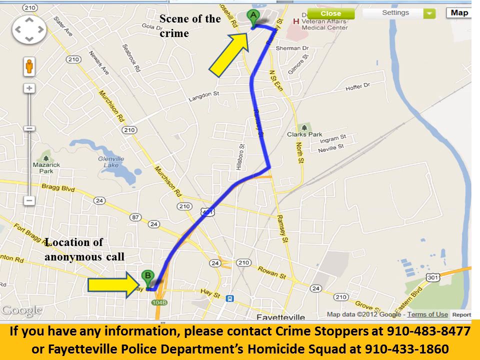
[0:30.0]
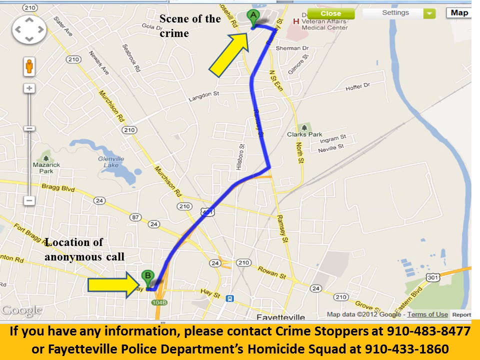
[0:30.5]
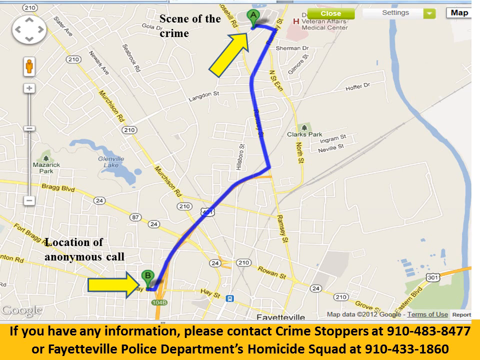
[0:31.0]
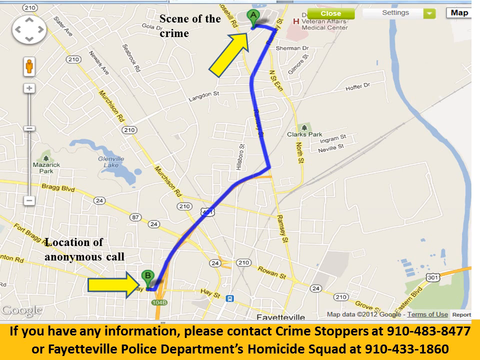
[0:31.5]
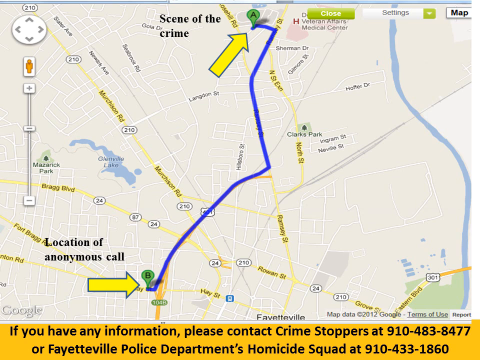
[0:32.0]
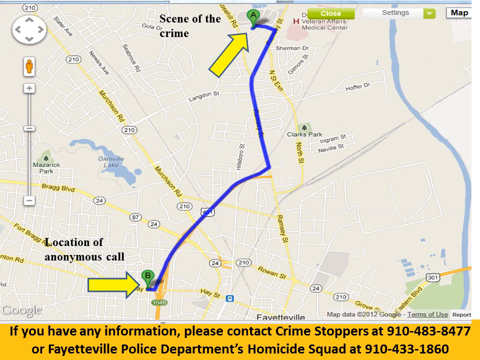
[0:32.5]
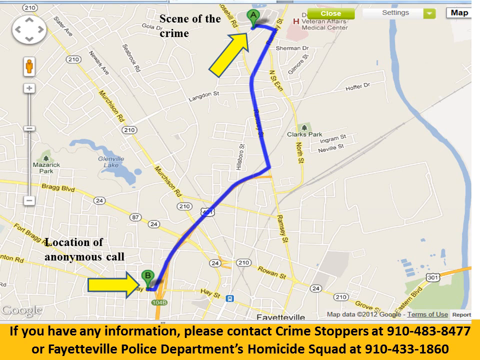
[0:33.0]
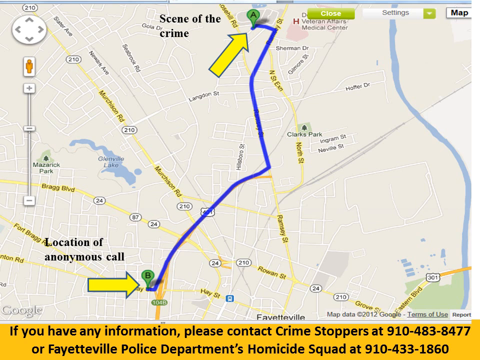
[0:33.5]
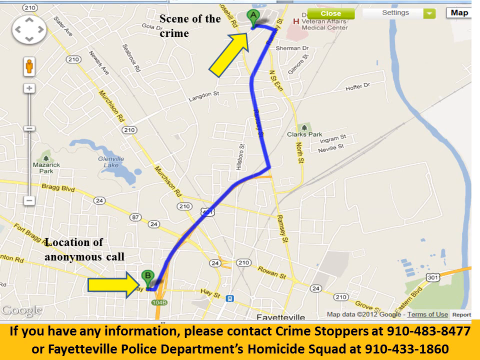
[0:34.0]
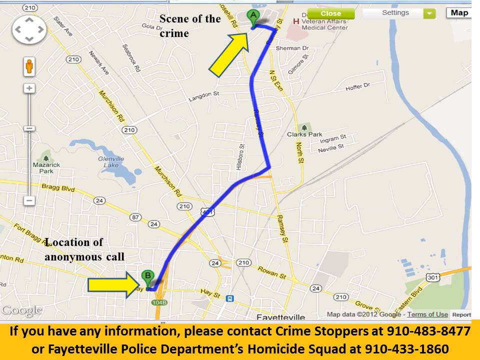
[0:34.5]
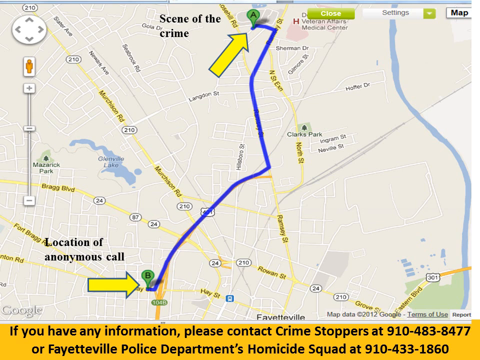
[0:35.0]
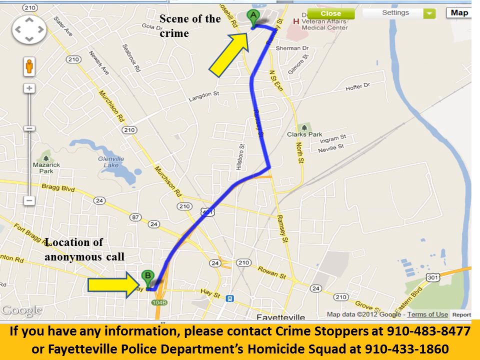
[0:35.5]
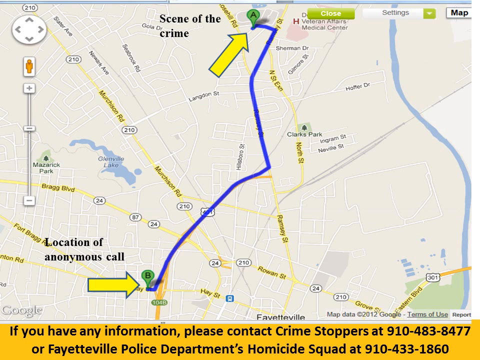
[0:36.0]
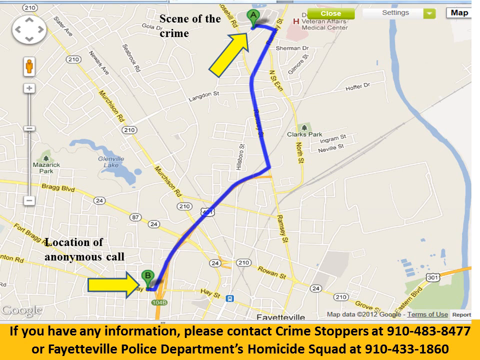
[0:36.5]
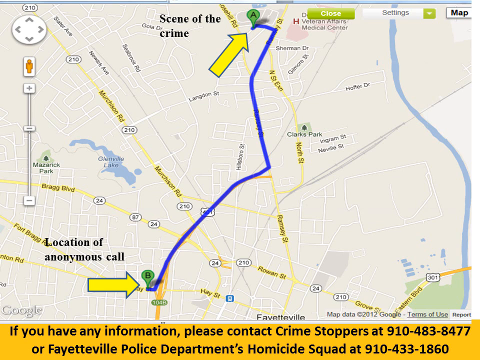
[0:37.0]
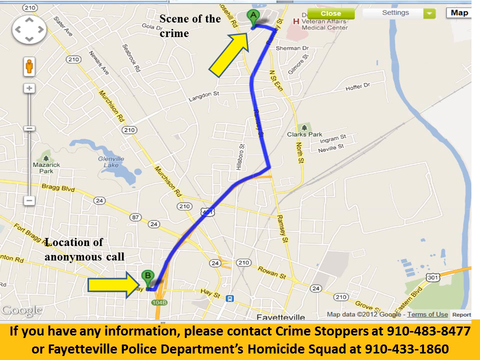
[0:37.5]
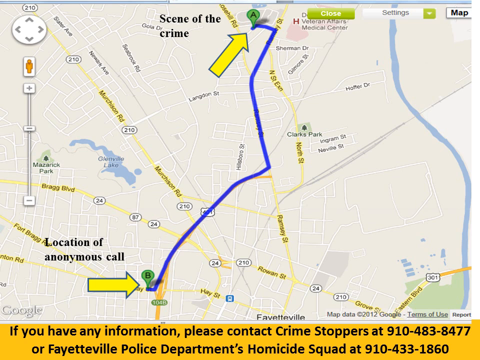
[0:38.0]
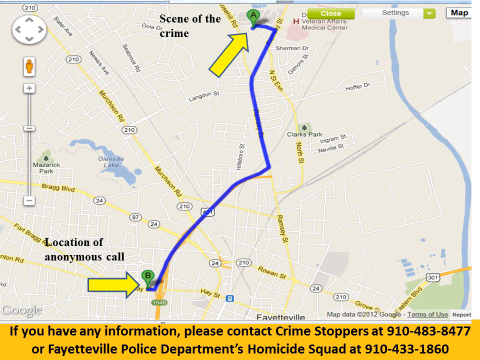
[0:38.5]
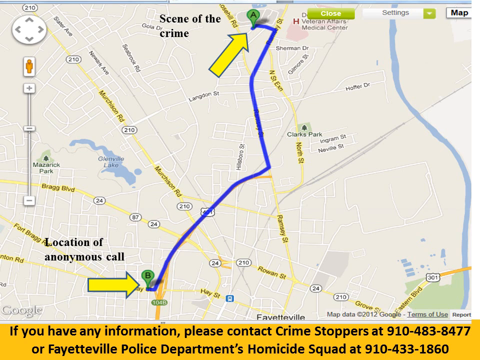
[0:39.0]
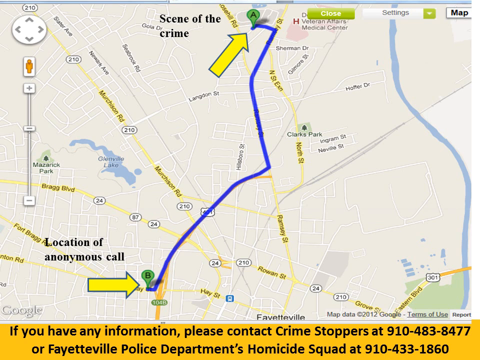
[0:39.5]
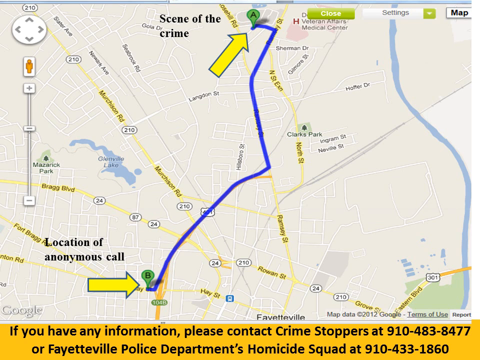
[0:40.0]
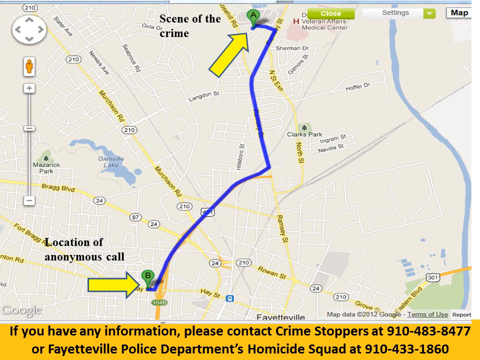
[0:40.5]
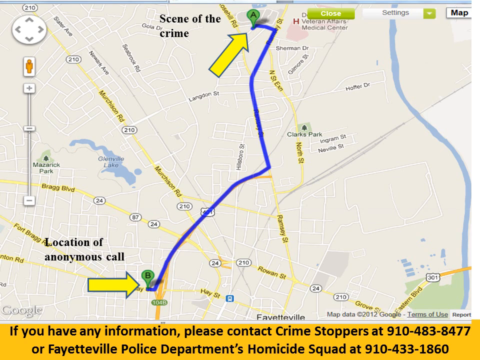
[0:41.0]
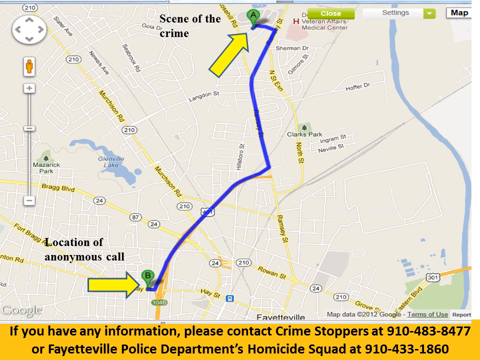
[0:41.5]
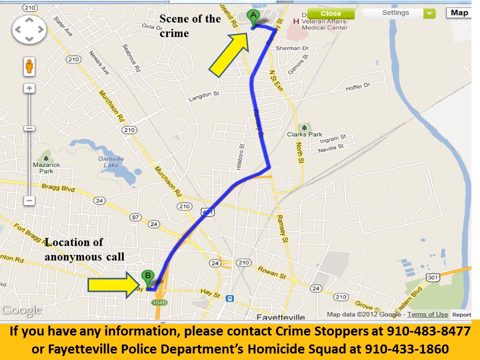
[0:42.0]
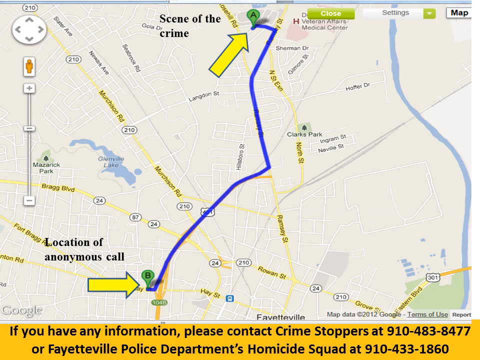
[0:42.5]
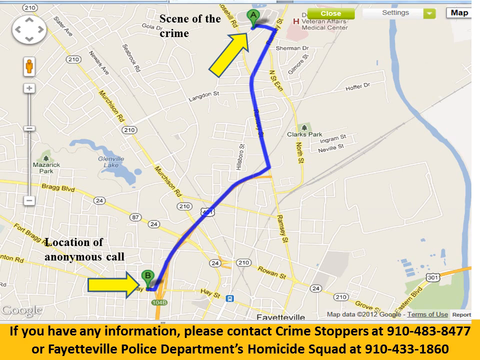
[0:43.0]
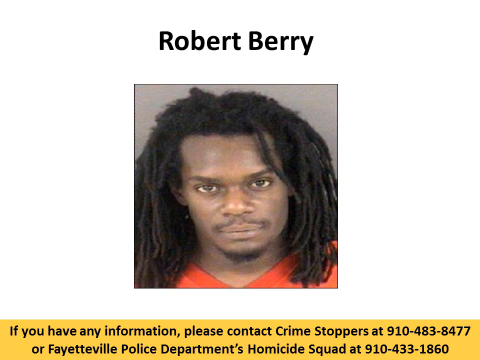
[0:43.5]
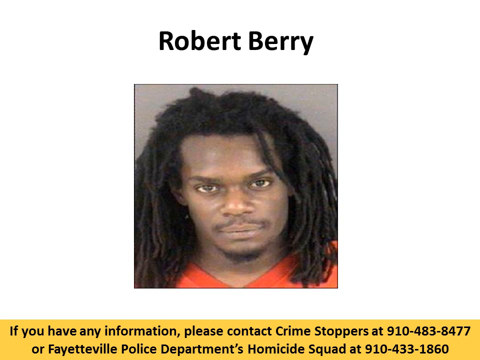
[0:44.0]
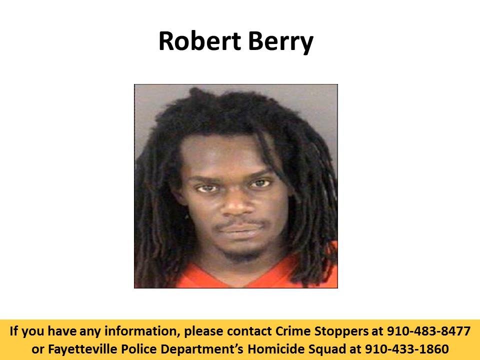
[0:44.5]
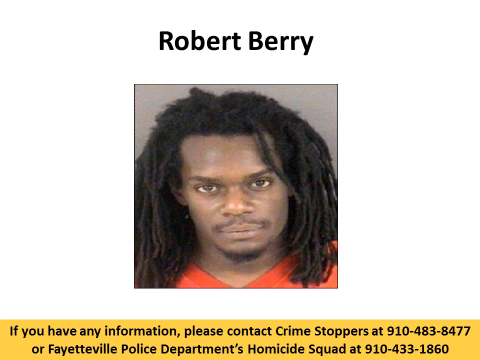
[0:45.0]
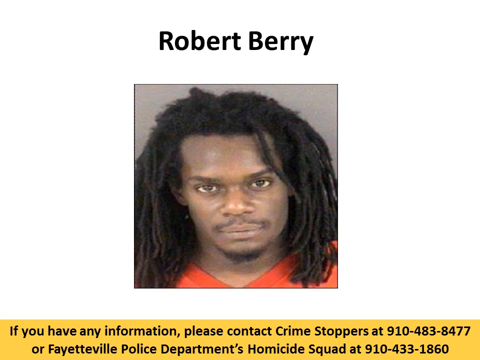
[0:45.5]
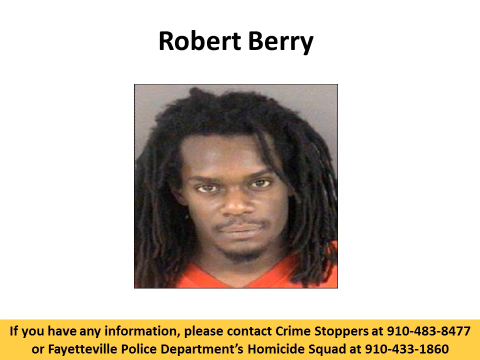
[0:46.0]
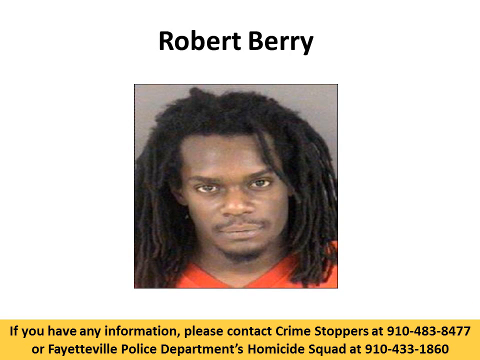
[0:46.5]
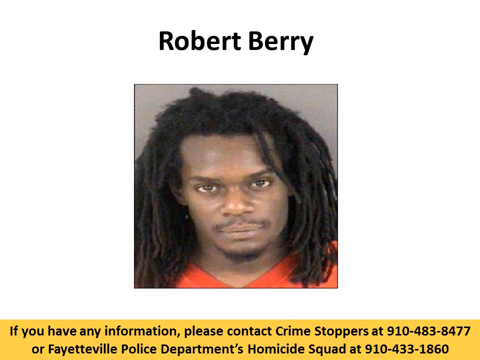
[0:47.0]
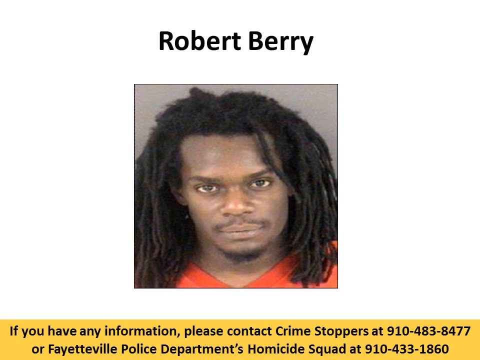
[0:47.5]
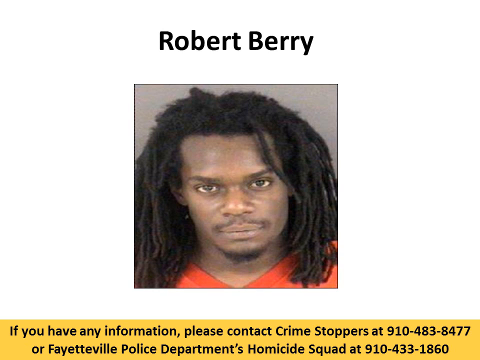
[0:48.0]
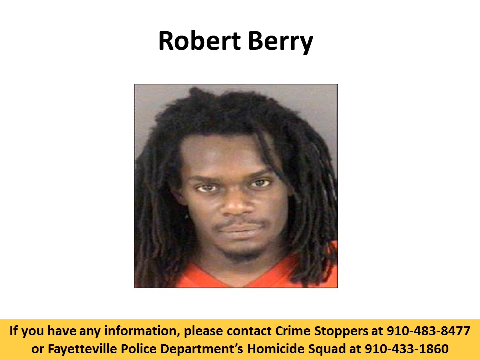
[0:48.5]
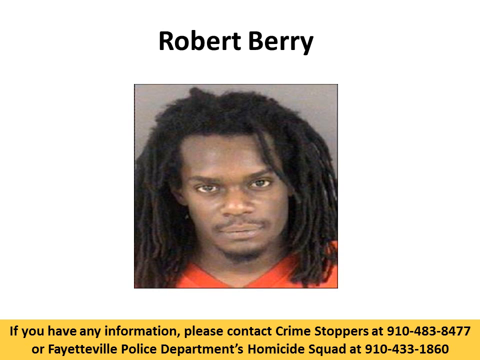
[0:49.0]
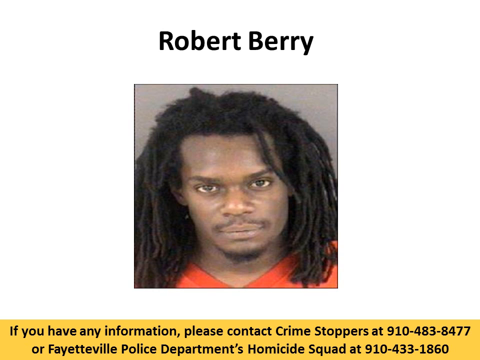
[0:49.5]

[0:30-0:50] The view is of a map that is mostly a beige color. Two large yellow arrows are on the screen. At the top is a yellow line where a yellow arrow is pointing, and a purple line starts at the top and goes to the bottom, connecting the arrows. At the bottom of the screen a number appears: 9104838477. The map has a legend, an orange icon of a person, a control to zoom in and zoom out, and a button that says "Settings."